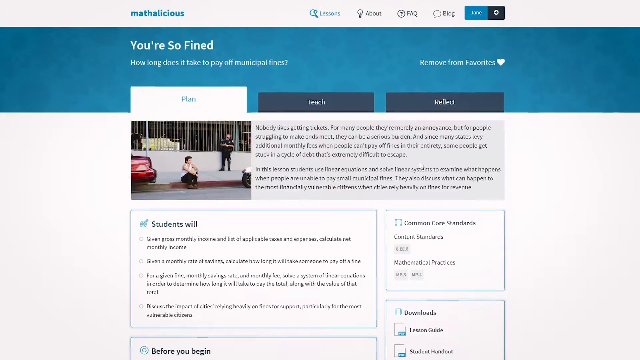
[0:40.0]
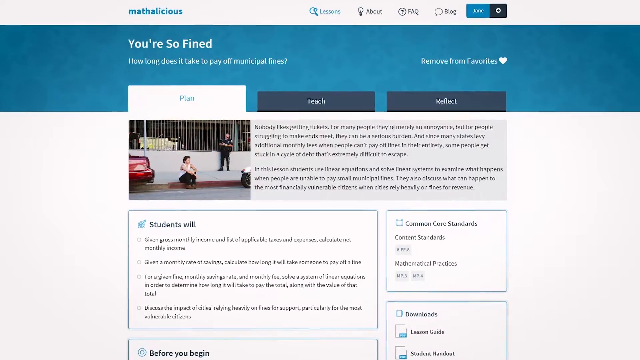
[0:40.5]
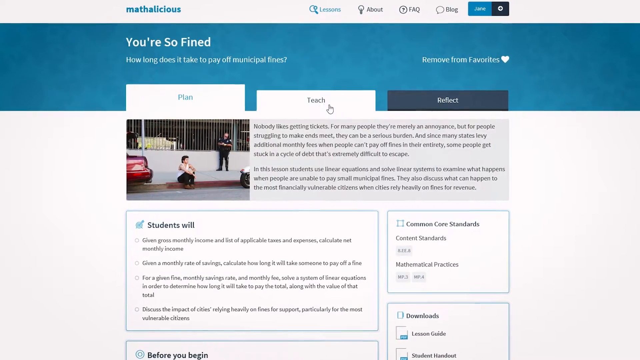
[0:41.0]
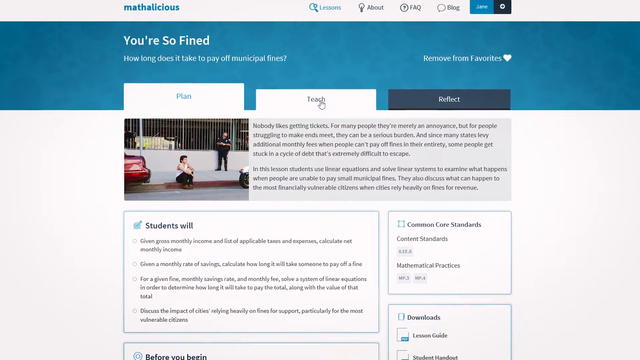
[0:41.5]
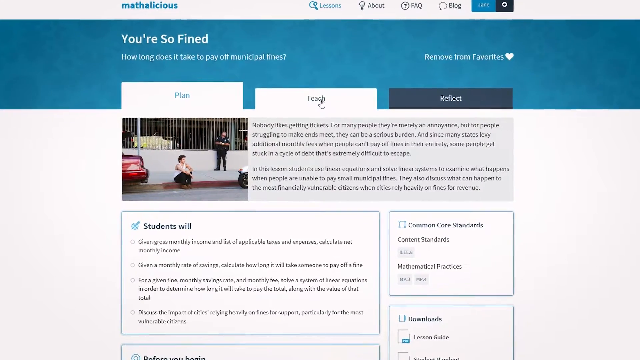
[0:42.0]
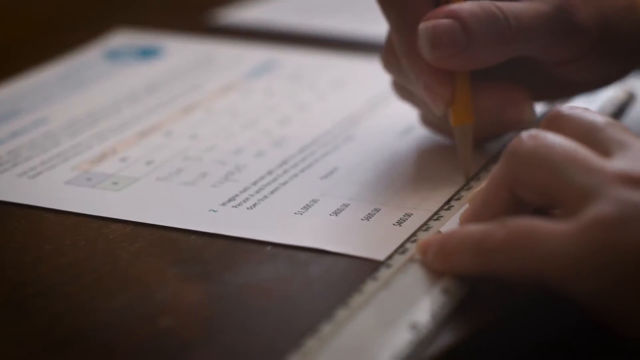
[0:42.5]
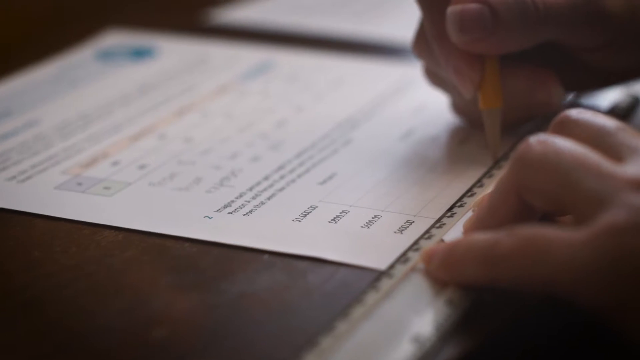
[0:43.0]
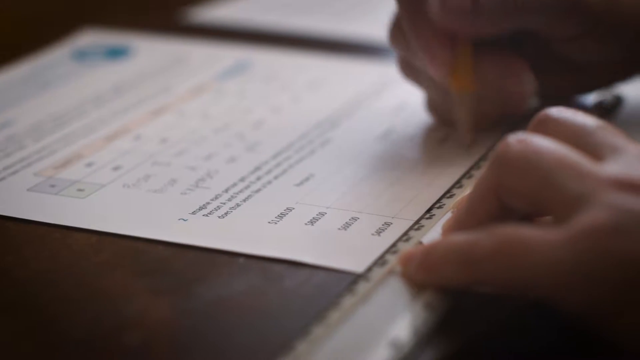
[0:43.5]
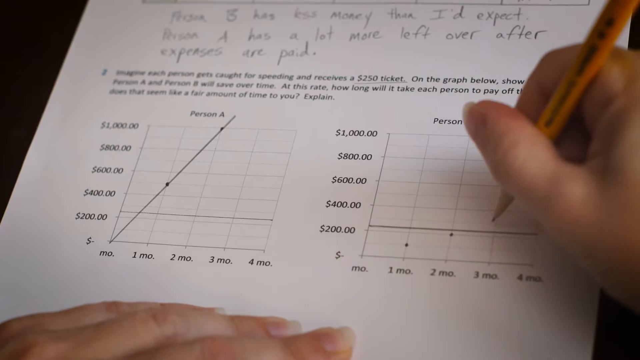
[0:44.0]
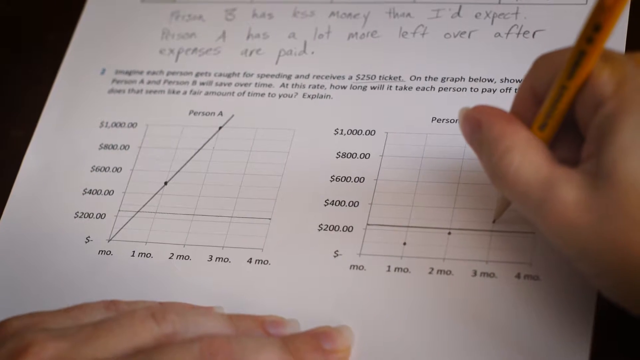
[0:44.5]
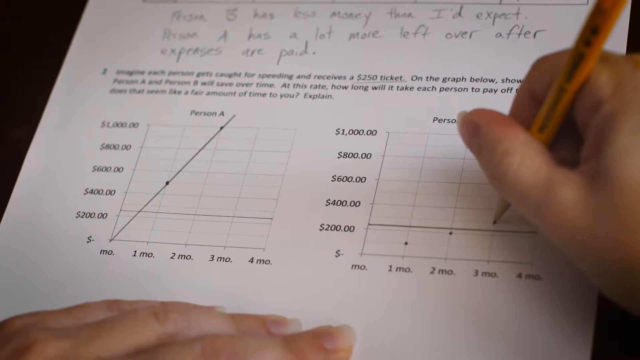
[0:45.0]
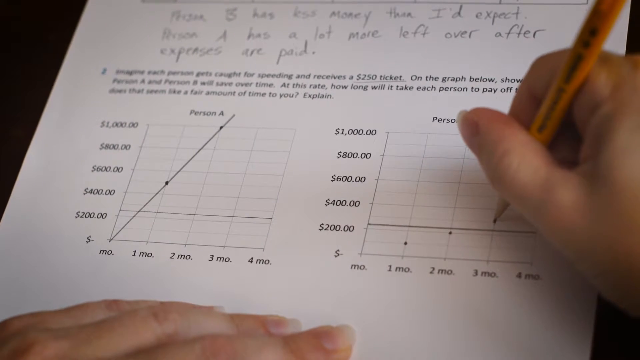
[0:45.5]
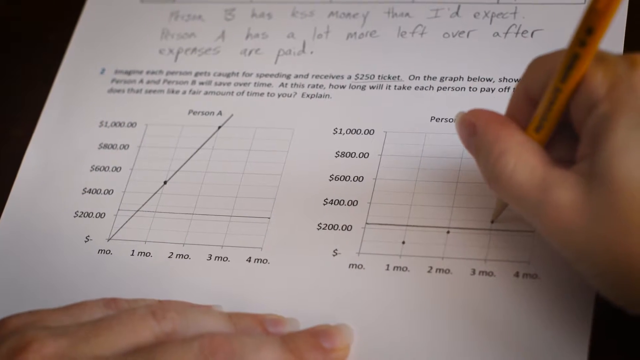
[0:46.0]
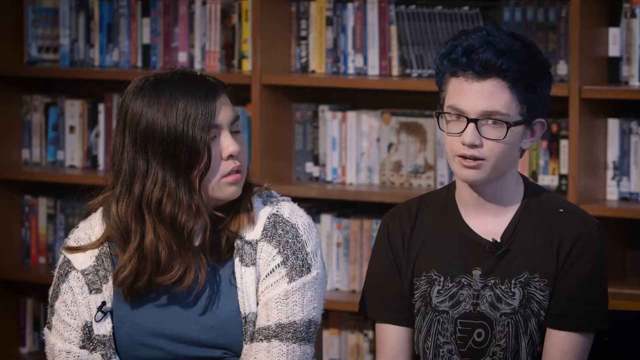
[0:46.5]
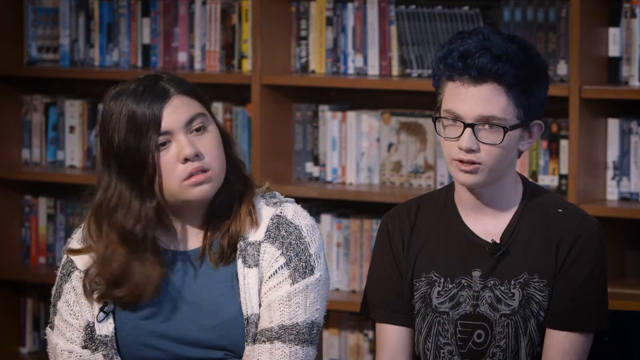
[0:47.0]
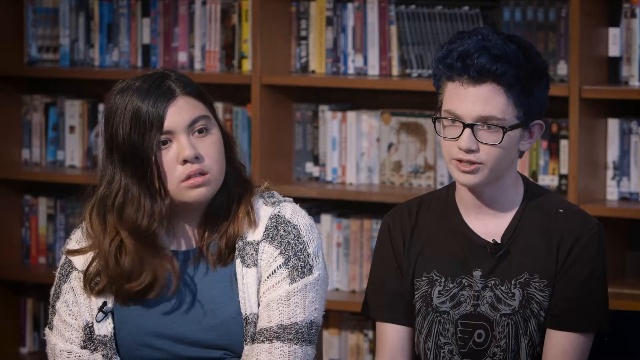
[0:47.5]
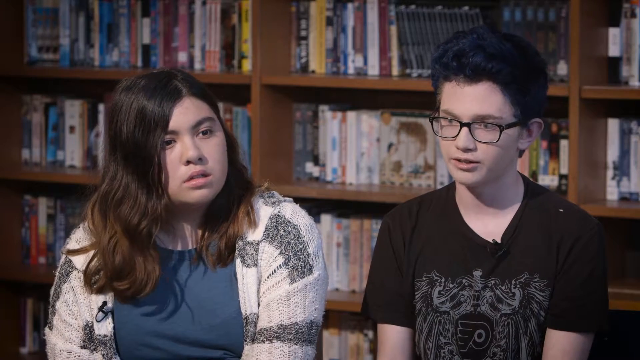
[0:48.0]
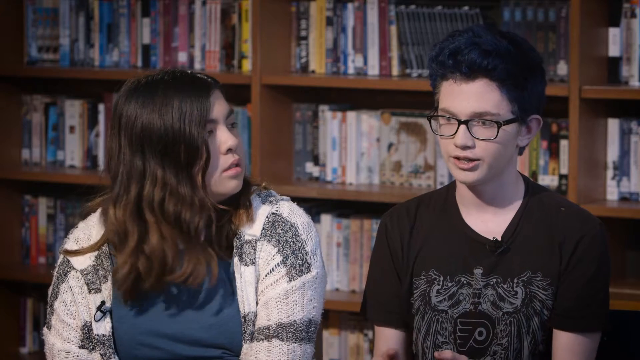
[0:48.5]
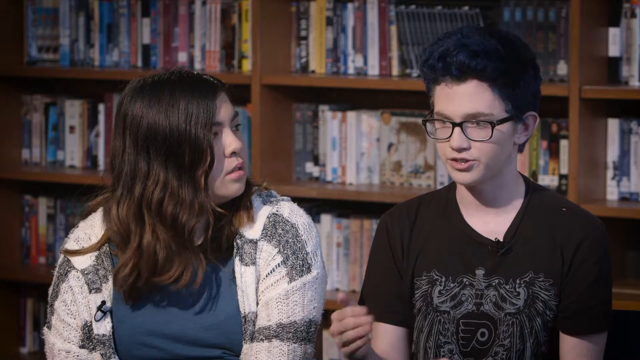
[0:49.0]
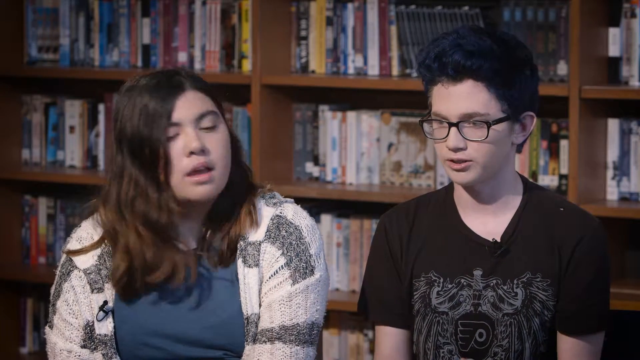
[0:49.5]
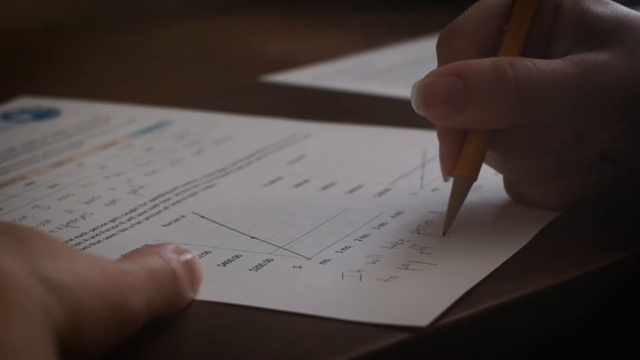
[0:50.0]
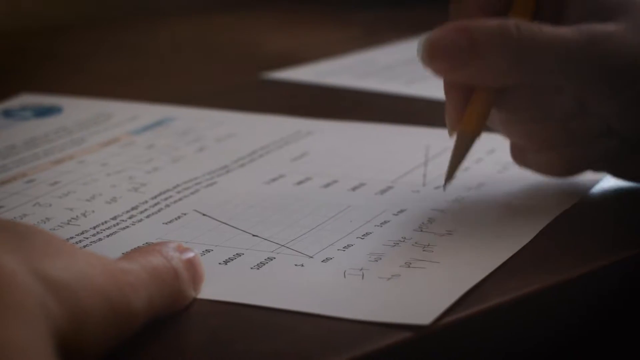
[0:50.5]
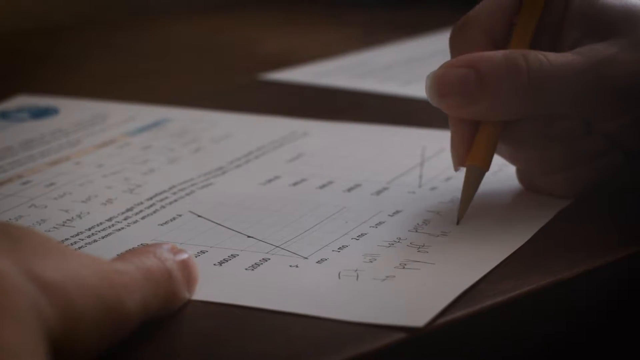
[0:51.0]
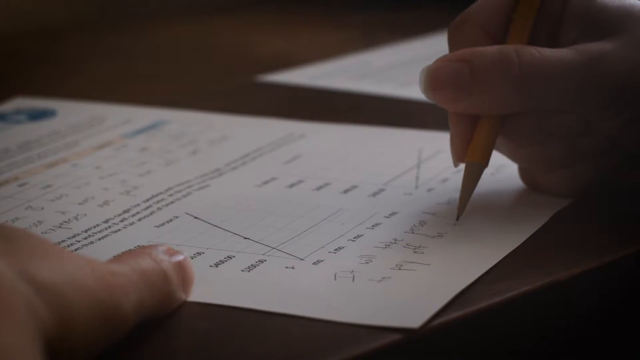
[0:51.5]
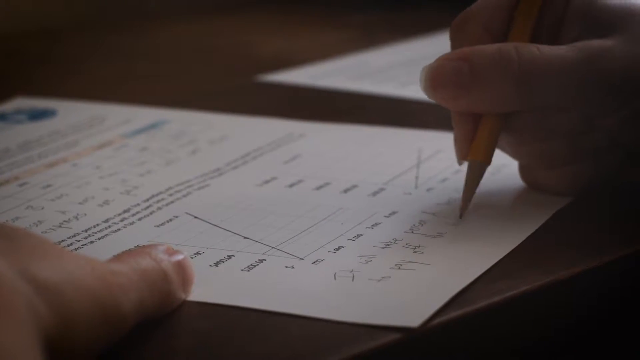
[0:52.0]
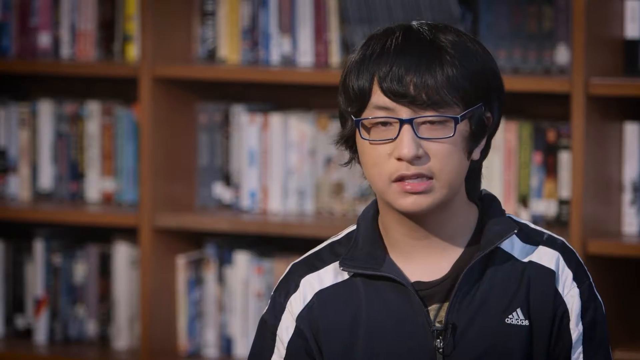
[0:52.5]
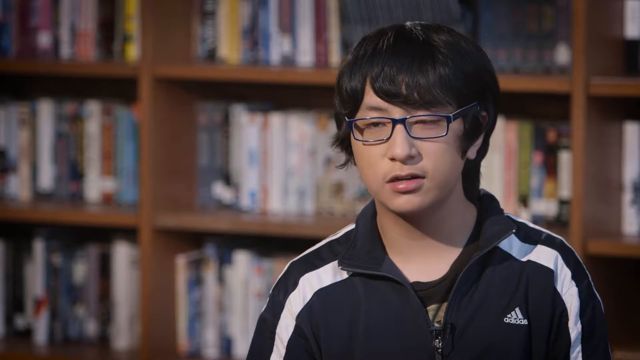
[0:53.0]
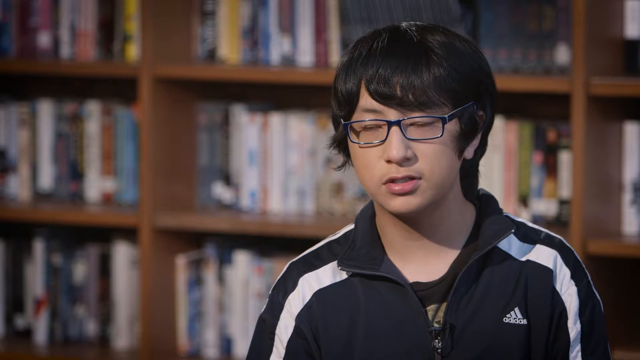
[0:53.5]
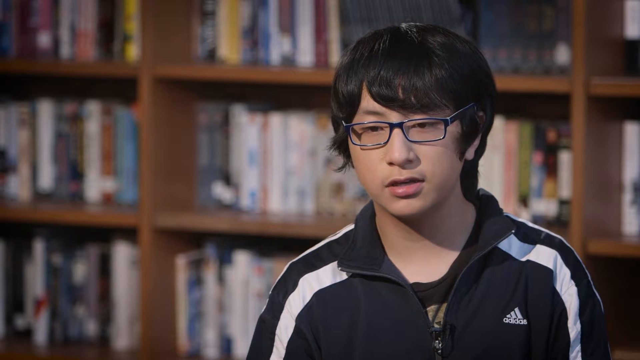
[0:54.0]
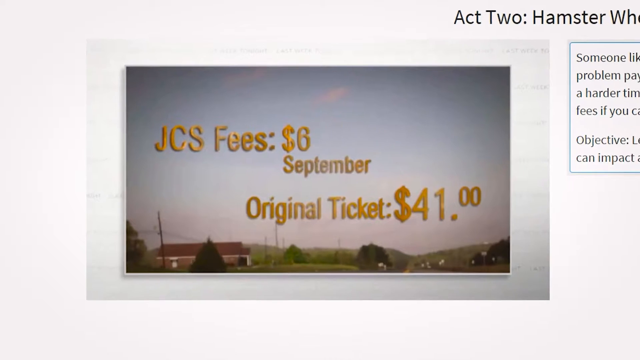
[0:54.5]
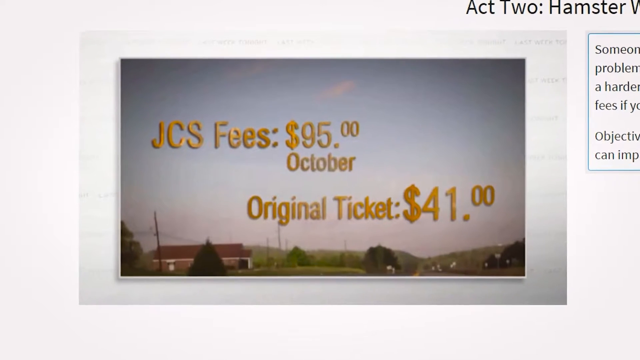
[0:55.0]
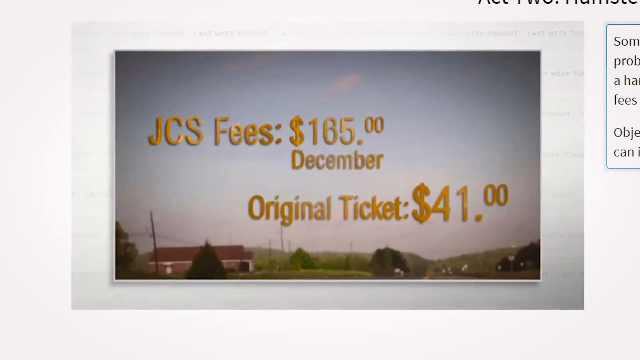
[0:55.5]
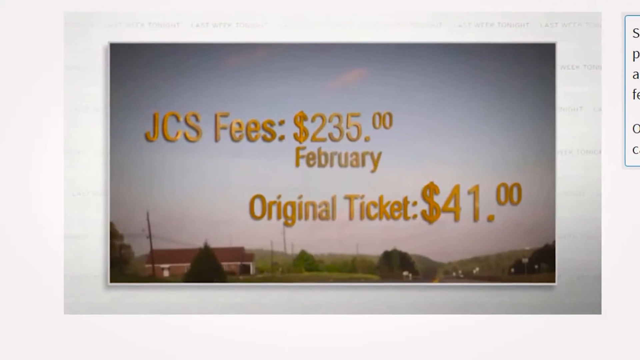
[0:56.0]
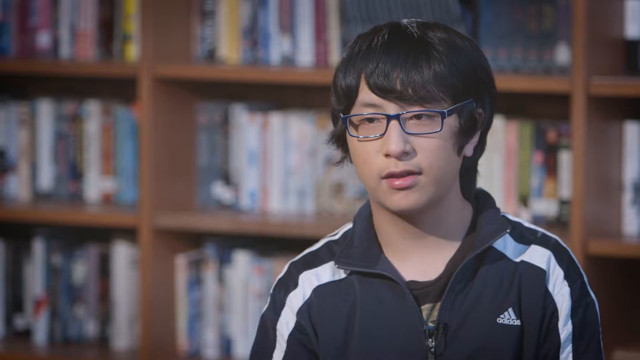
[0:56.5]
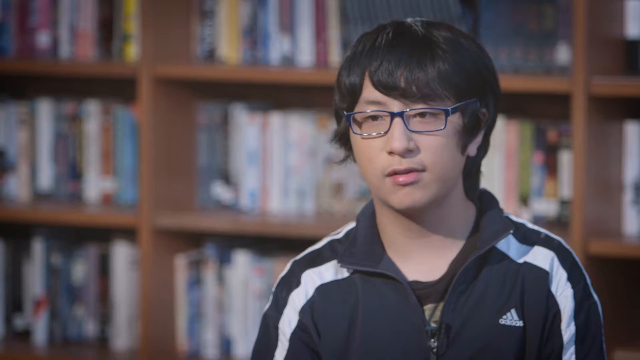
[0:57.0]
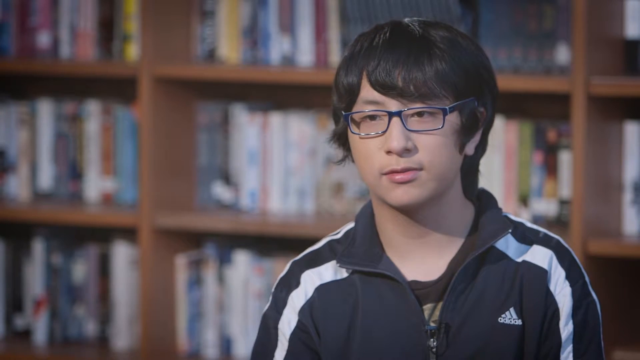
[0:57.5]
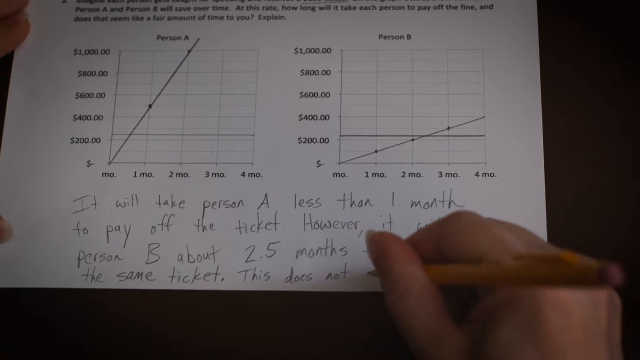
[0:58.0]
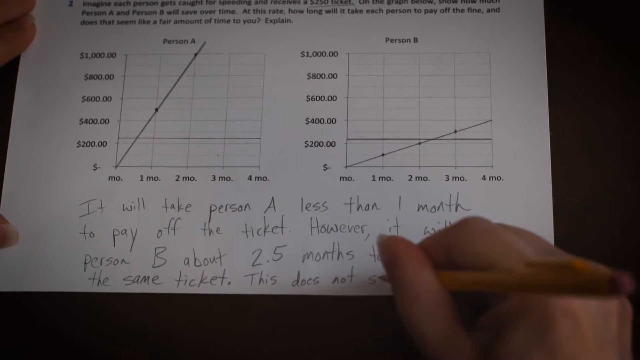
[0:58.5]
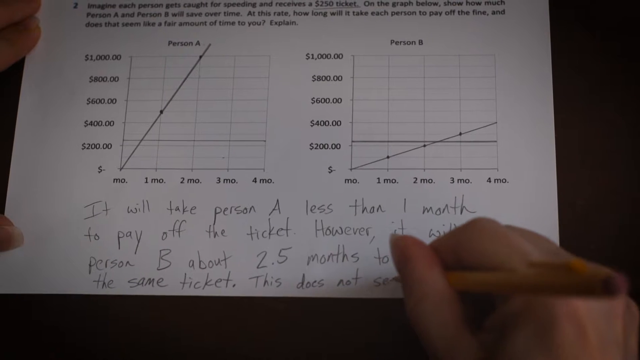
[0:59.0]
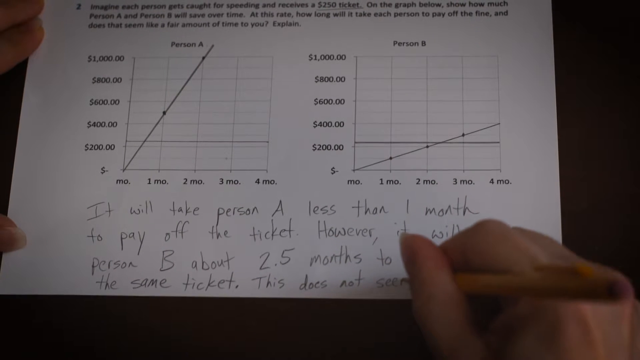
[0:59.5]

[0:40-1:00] The website is shown, with readable text about how long it takes to pay off municipal fines, and it lists a set of goals for students. A person writes on a worksheet, filling out a graph. Next, two young teenagers appear: one has glasses, black dyed hair and a t-shirt with a Philadelphia Flyers logo; the other has long hair and wears a blue t-shirt and a coat. They are in a library, with a bookshelf filled with books behind them. The student writing on the sheet of paper is shown again. Then a young Asian teenager with glasses and an Adidas jacket appears. The teenagers seem to be doing an interview. The view pans back to the website, which makes a comparison to the original ticket.